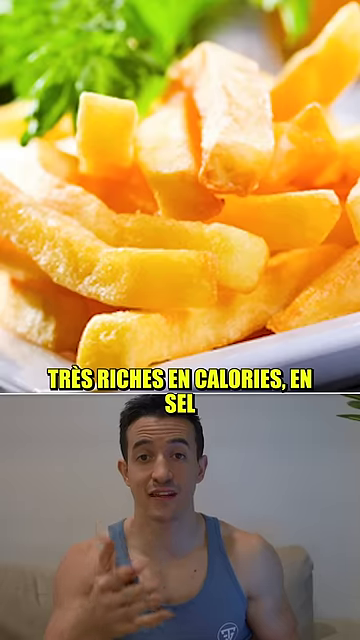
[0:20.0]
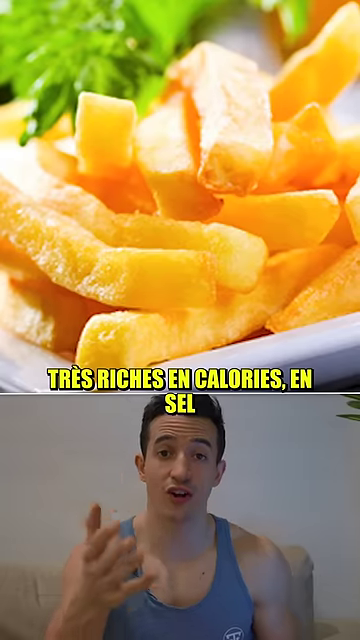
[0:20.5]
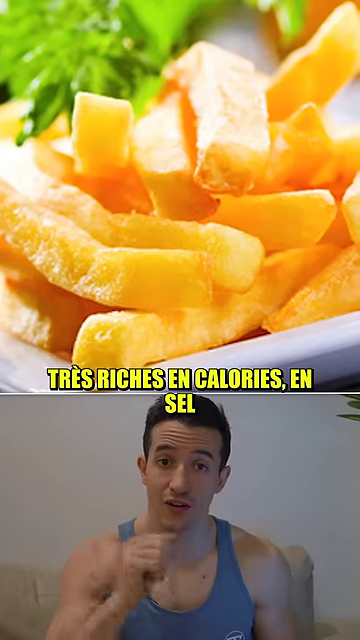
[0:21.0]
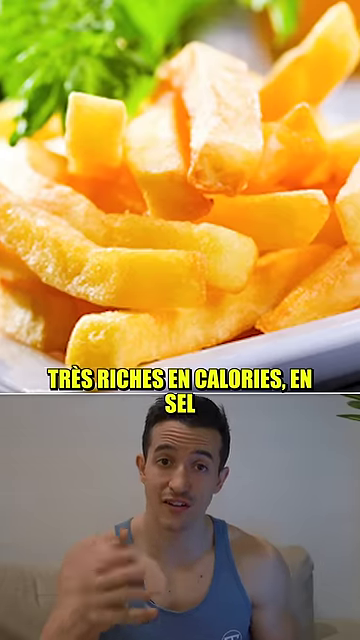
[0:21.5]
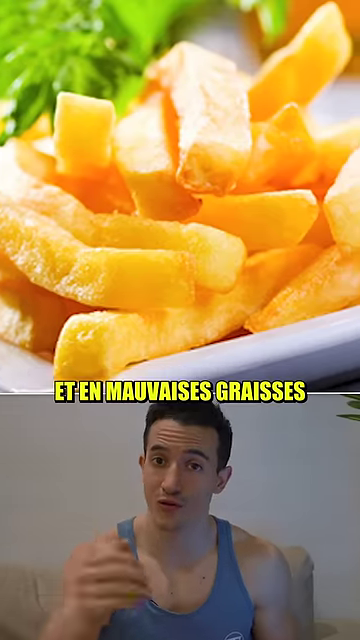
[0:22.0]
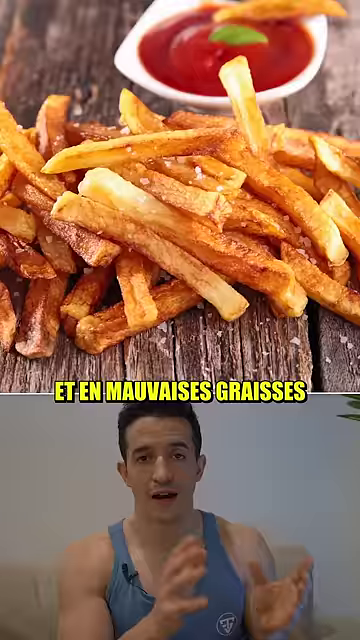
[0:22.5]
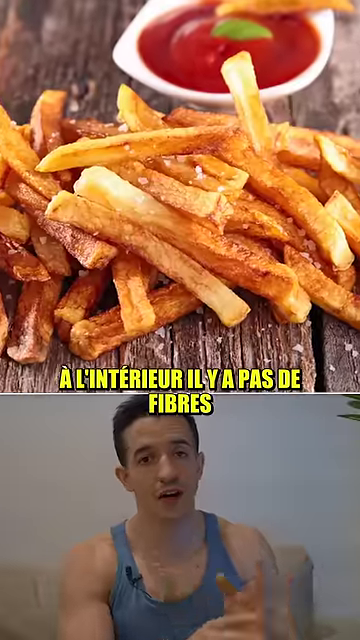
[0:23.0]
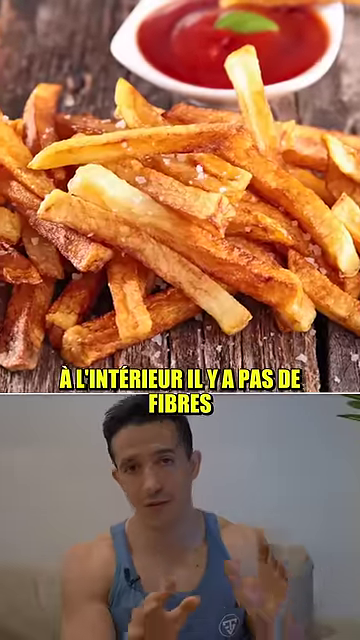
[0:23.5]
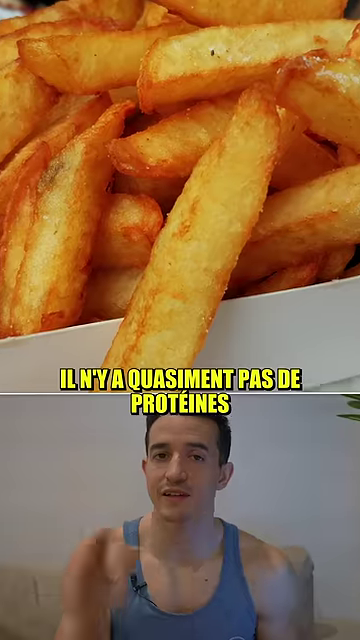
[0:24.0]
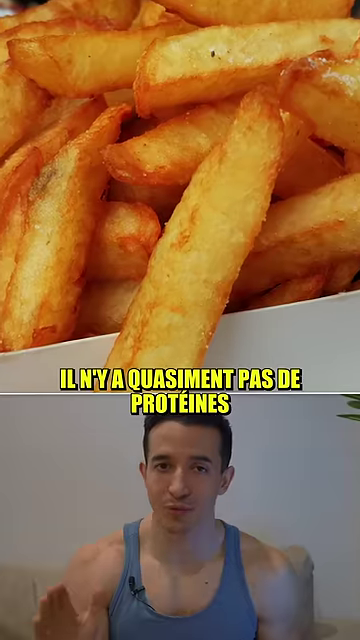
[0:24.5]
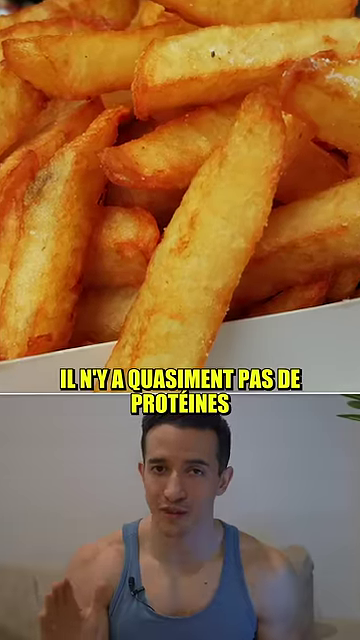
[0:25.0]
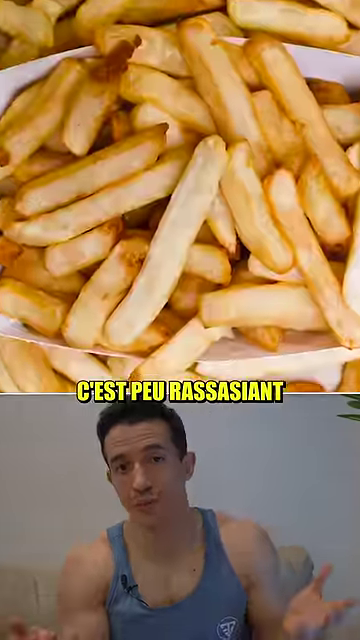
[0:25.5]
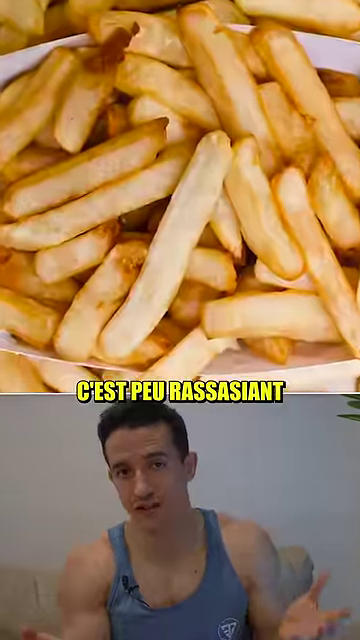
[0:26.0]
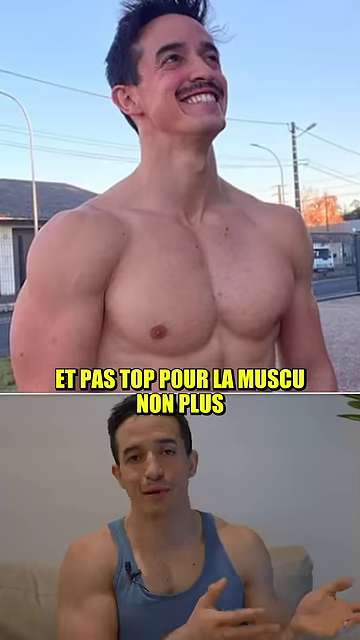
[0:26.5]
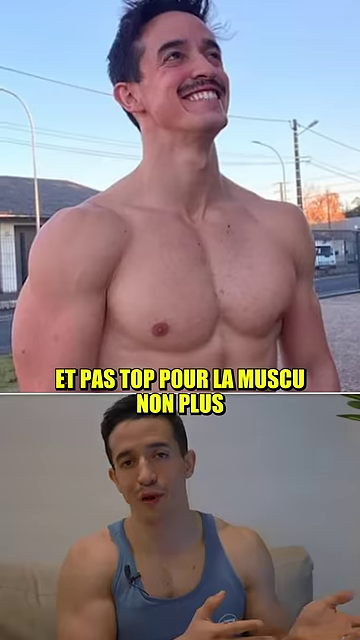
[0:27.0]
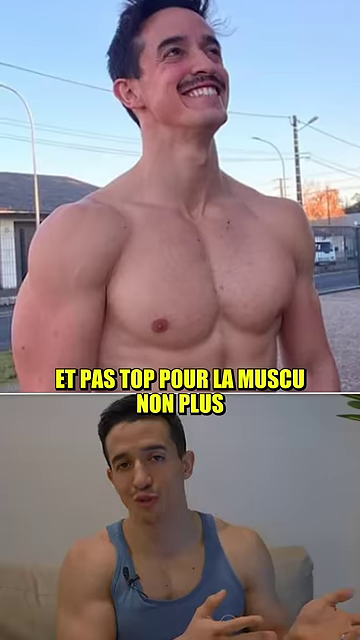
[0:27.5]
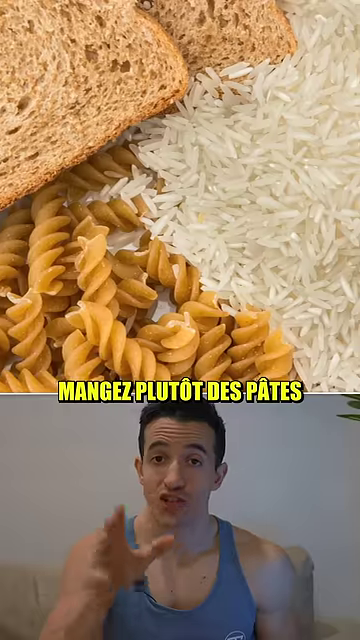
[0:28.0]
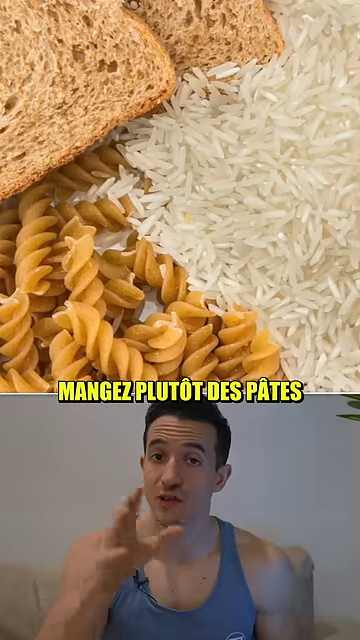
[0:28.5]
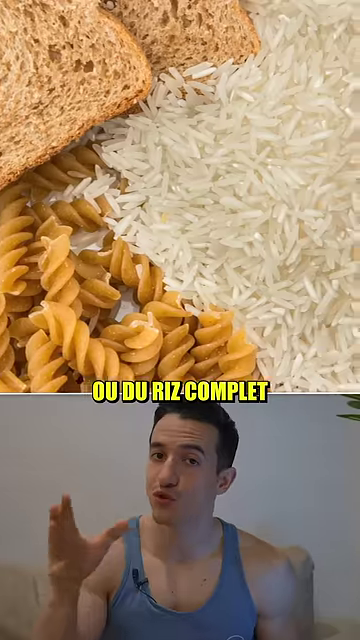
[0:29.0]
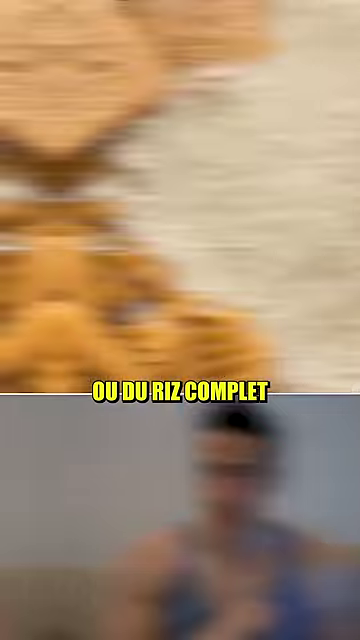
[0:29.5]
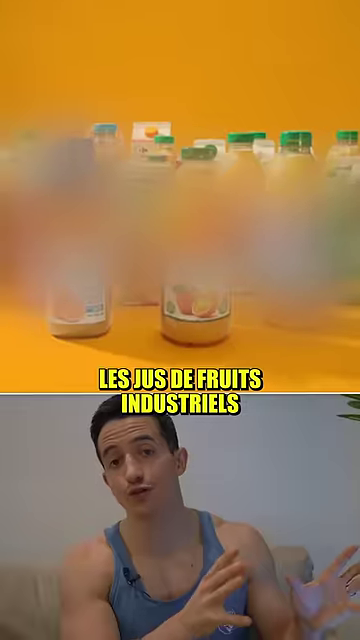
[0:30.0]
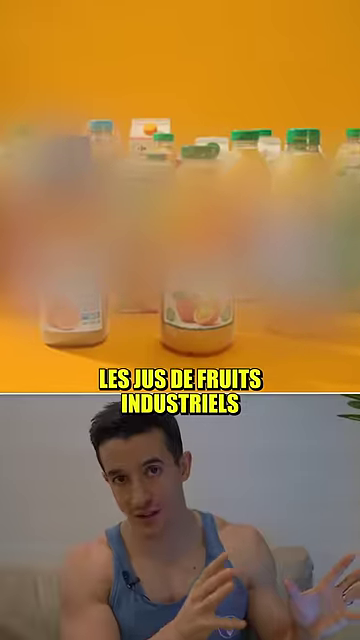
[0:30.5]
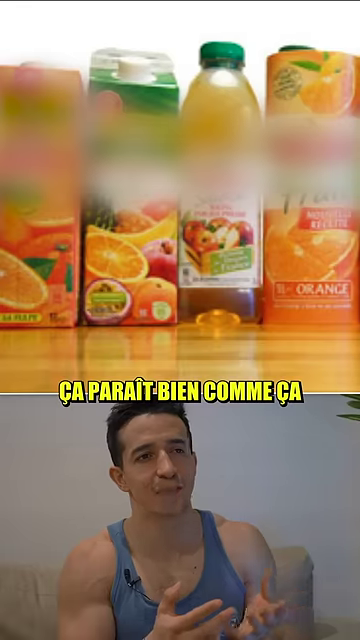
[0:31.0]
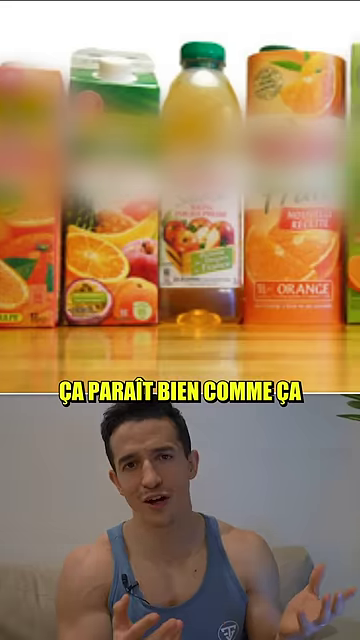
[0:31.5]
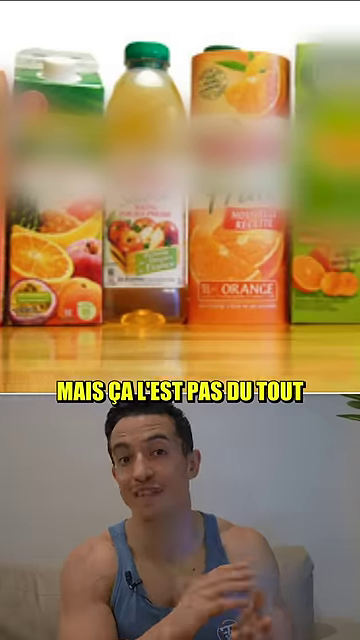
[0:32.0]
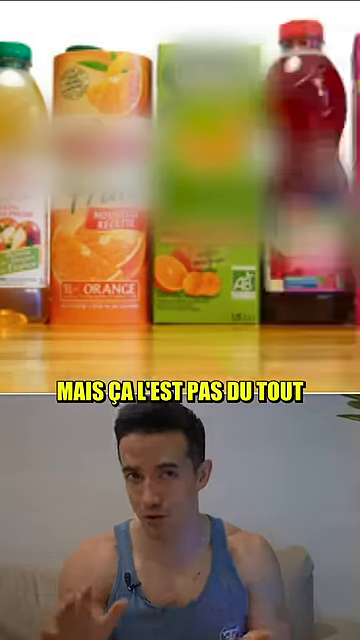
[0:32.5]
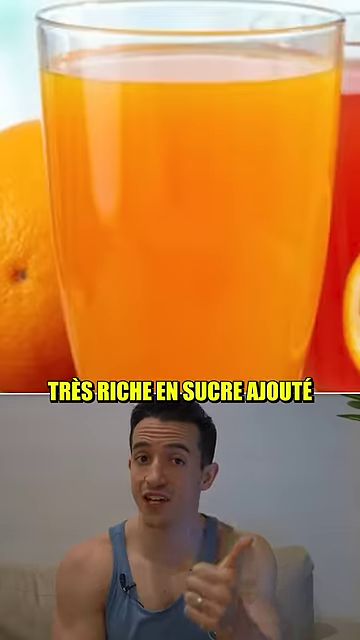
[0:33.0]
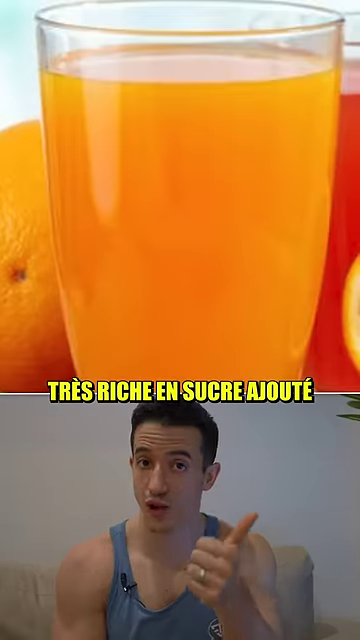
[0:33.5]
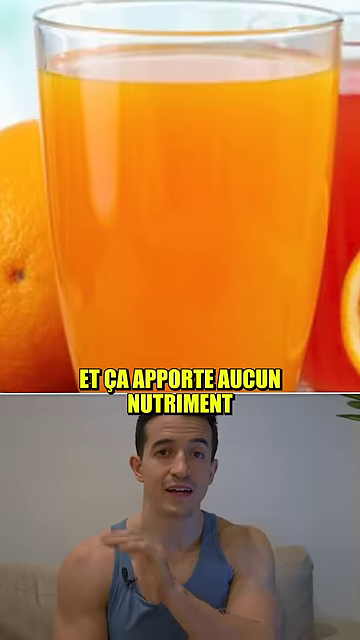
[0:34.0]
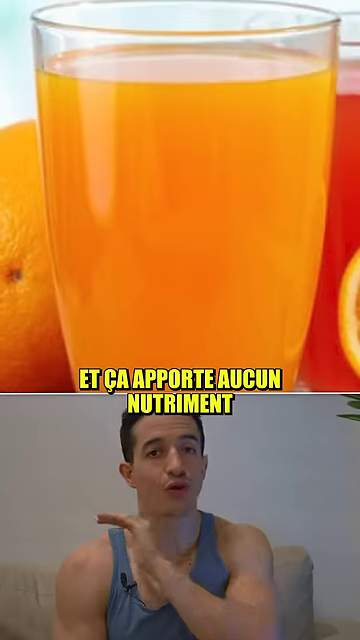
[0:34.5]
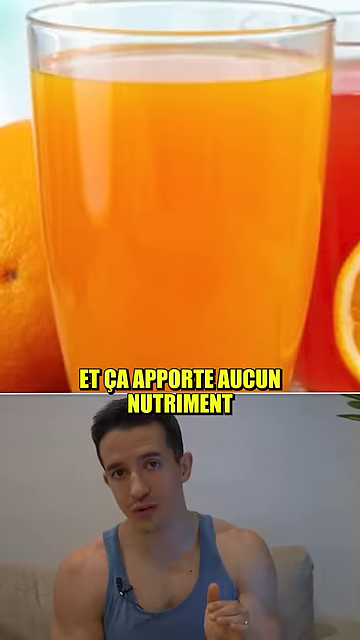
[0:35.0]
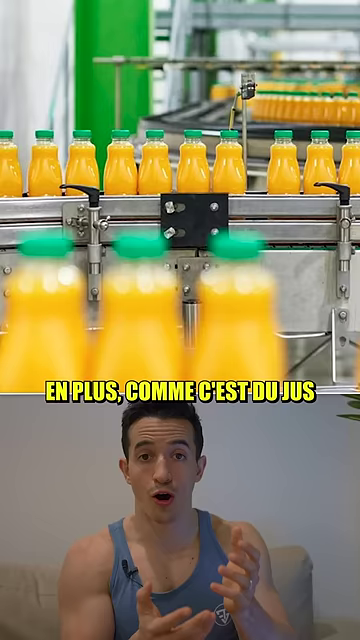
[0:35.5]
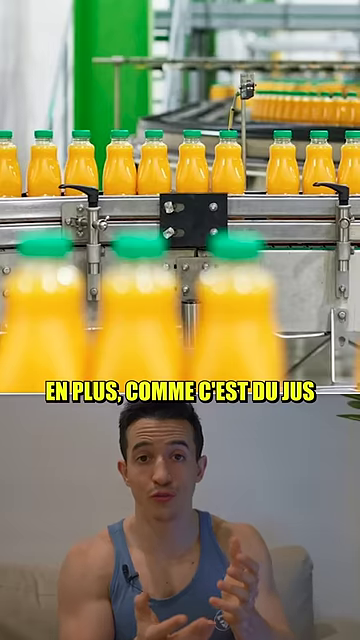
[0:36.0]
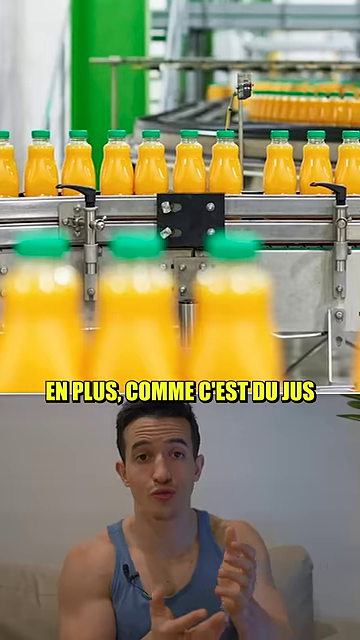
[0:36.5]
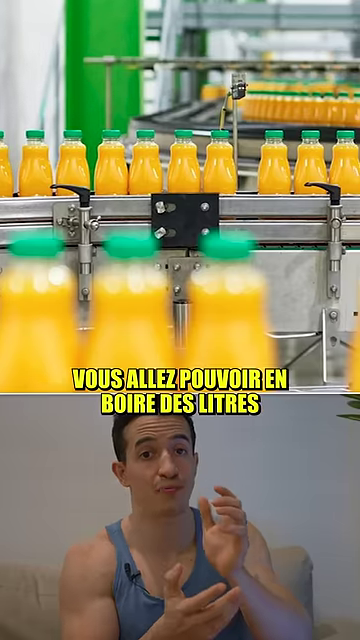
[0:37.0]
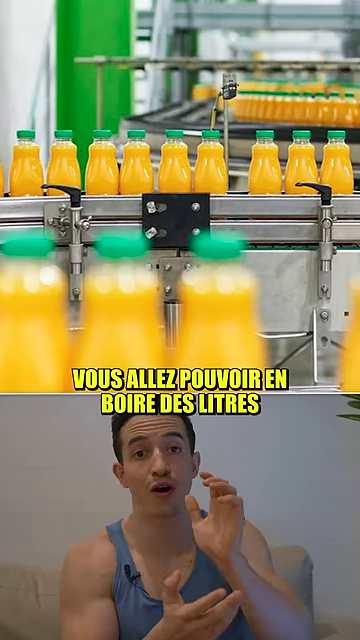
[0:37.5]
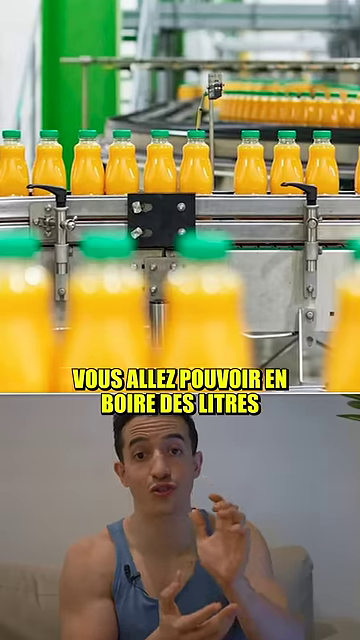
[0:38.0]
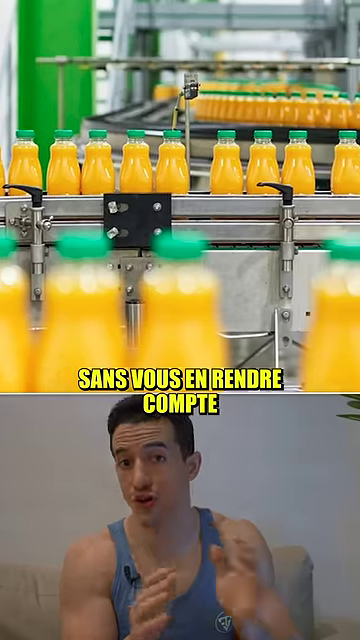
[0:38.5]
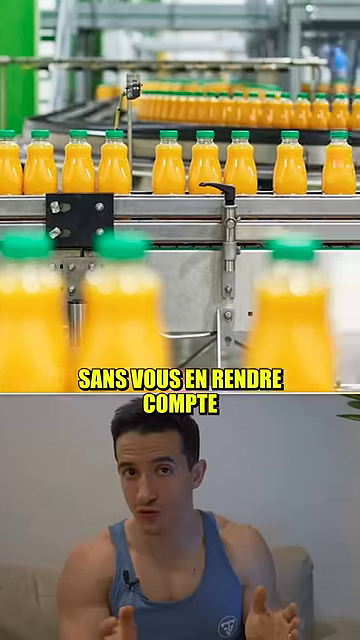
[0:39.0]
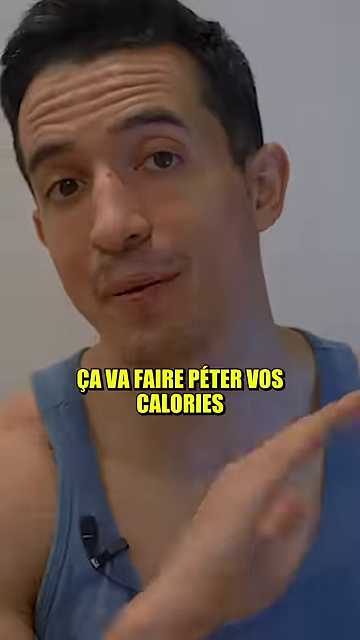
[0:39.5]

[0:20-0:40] The young man is still talking in the bottom half in his light blue tank top. At the top, French fries appear first, with text below that includes "PEU RASSASIANT". A very muscular, bodybuilder-type man appears at the top with the text "ET PAS TOPPOUR LA MASCU NON PLUS". Pasta and rice are shown, then a lot of orange juice, with text below that includes "Le Jus des Fruits Industrielles". Another shelf of fruits is superimposed, with the text "CA PARAIT BIN COMMECA". More text follows, then more juice with more text about how sweet the juice is.